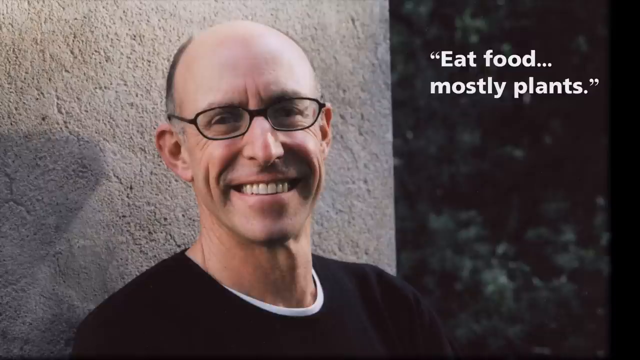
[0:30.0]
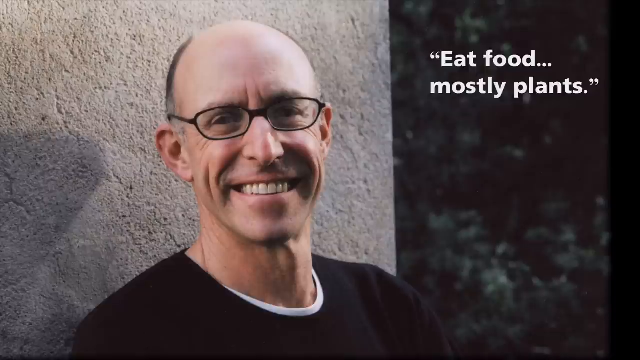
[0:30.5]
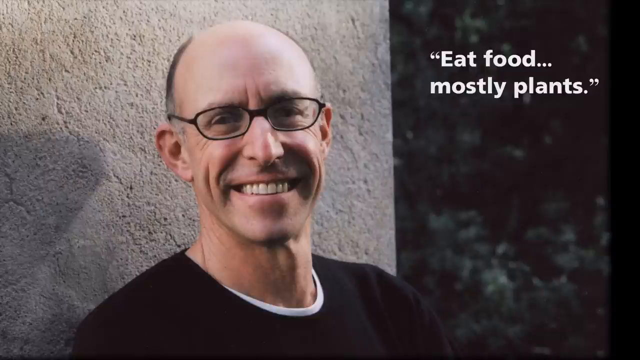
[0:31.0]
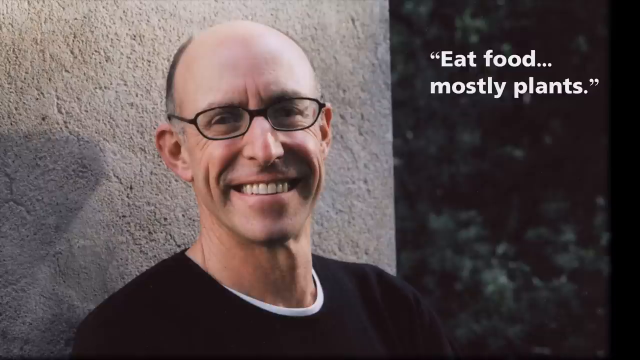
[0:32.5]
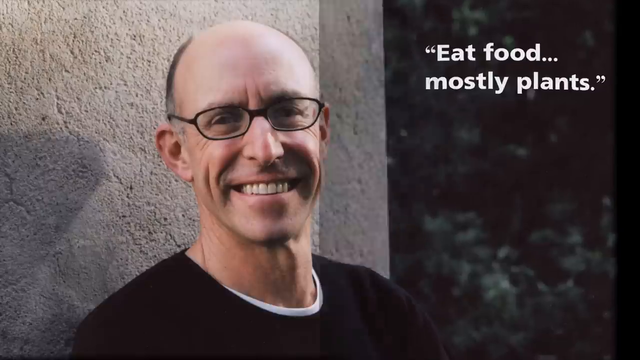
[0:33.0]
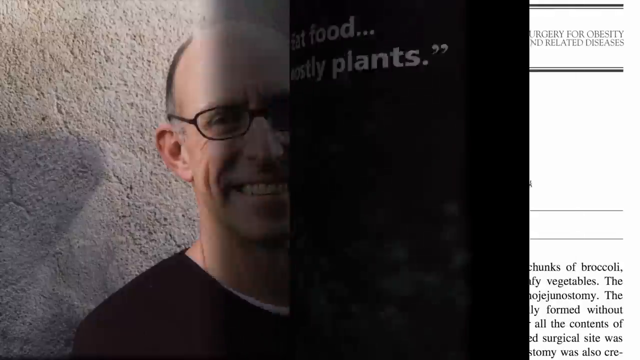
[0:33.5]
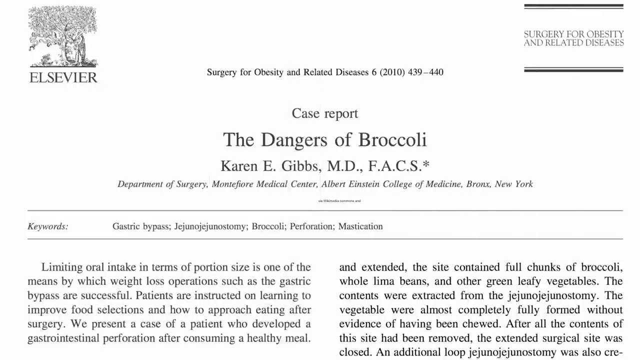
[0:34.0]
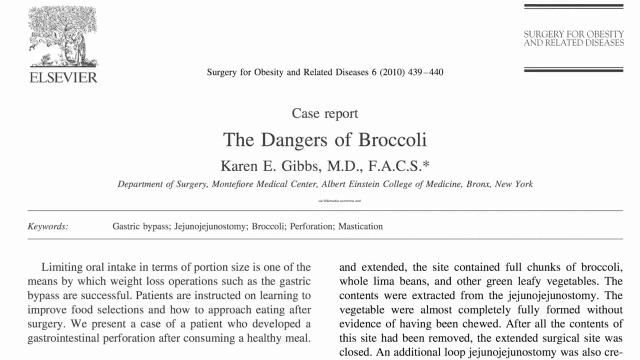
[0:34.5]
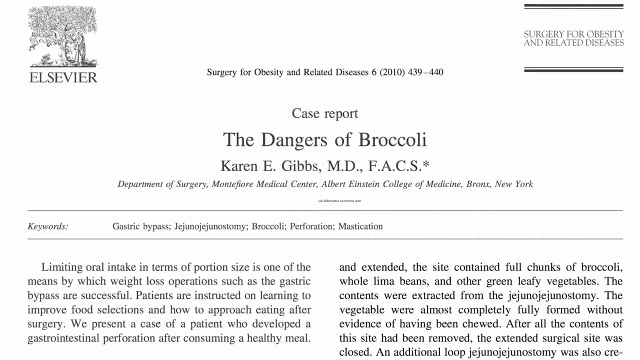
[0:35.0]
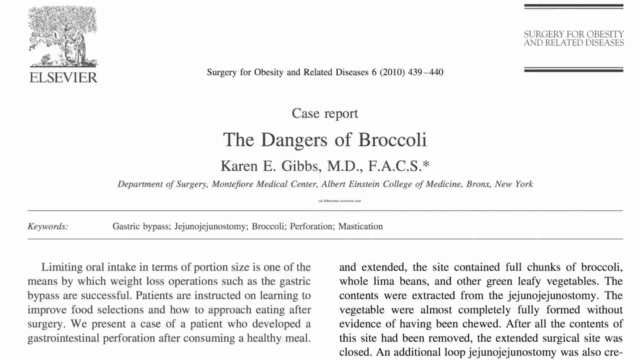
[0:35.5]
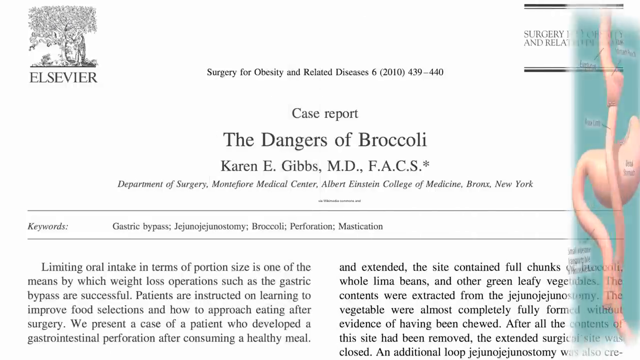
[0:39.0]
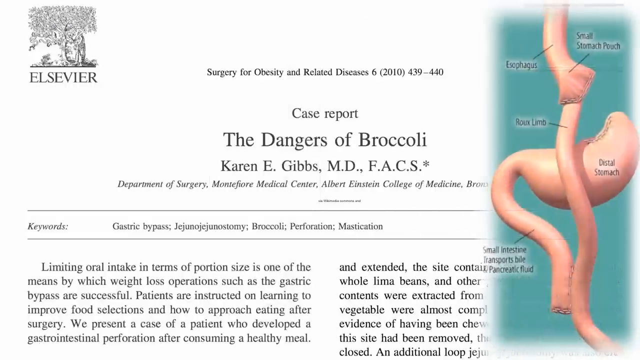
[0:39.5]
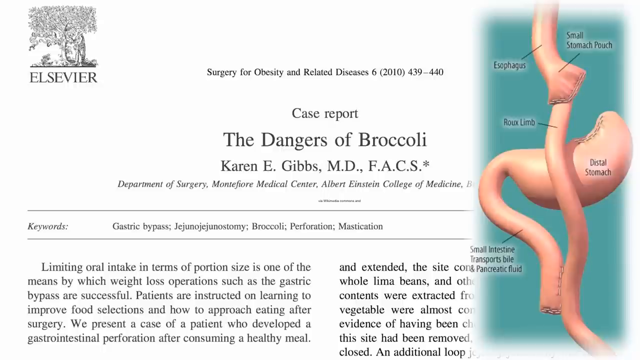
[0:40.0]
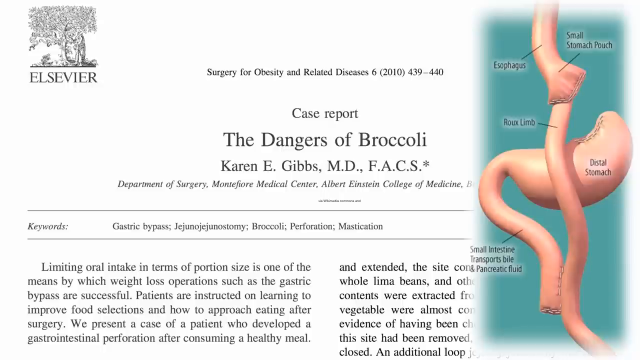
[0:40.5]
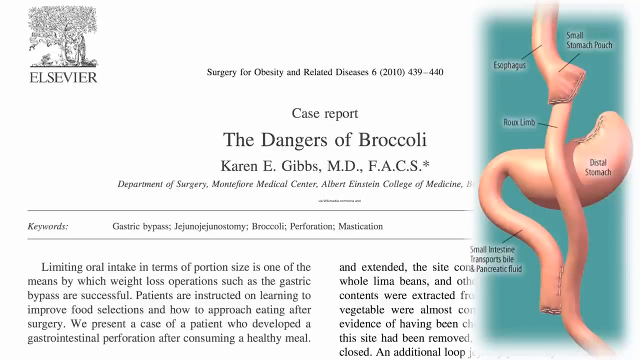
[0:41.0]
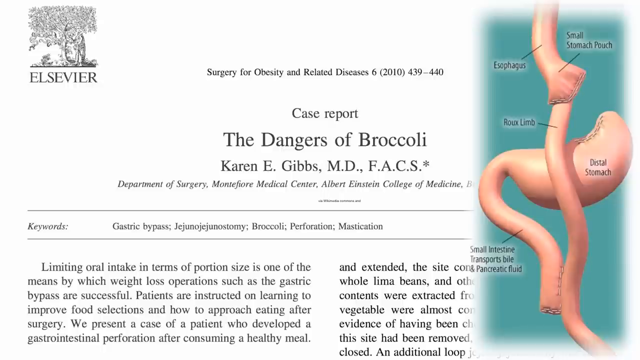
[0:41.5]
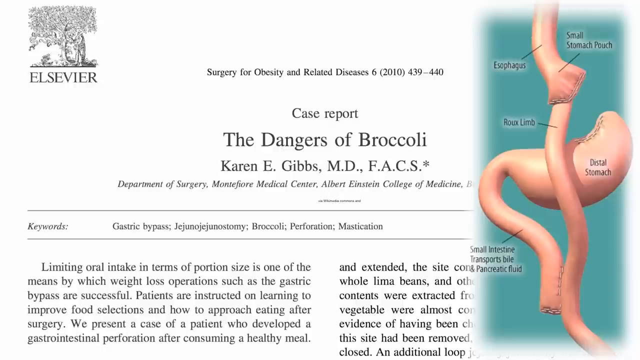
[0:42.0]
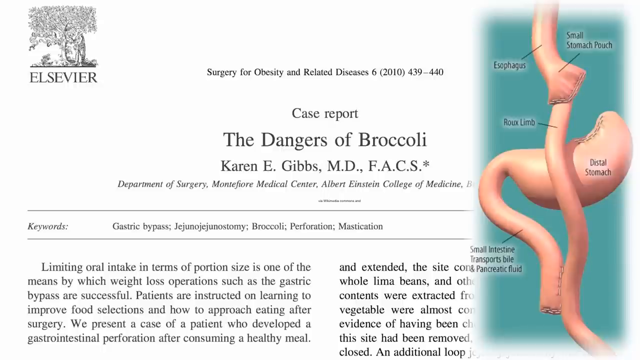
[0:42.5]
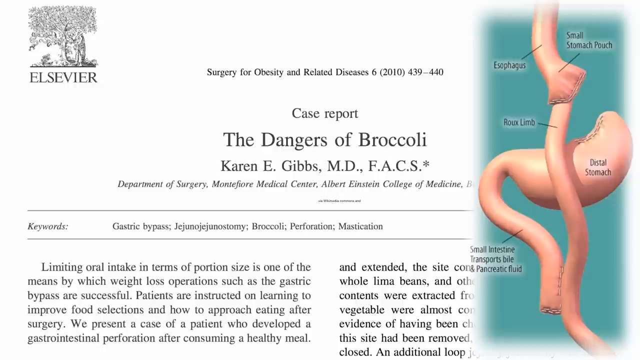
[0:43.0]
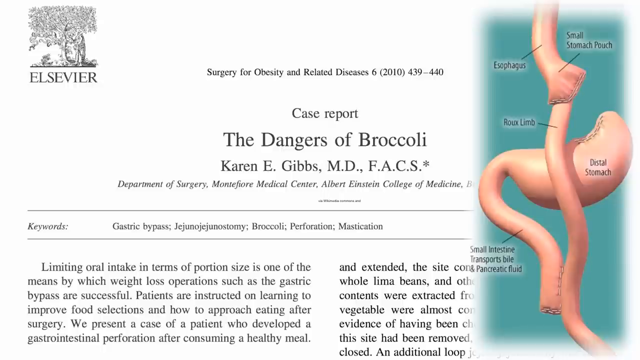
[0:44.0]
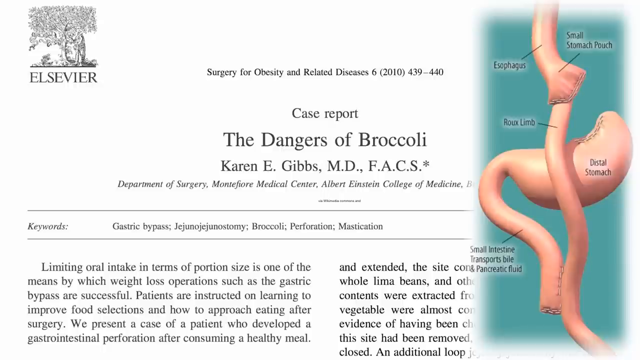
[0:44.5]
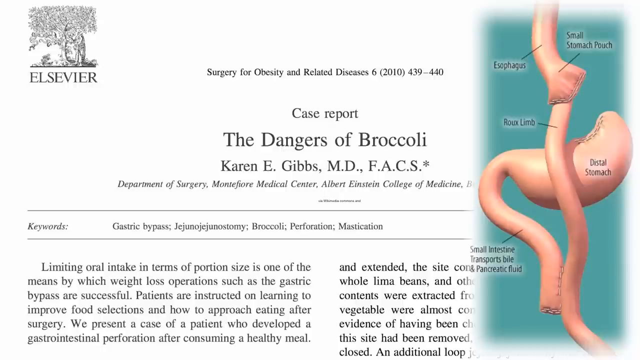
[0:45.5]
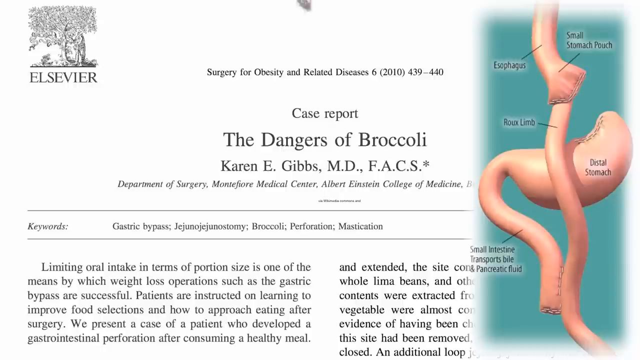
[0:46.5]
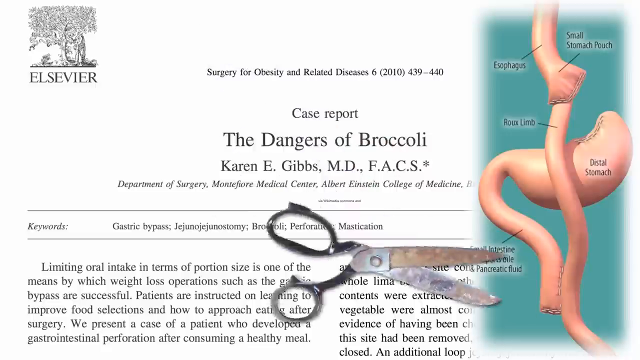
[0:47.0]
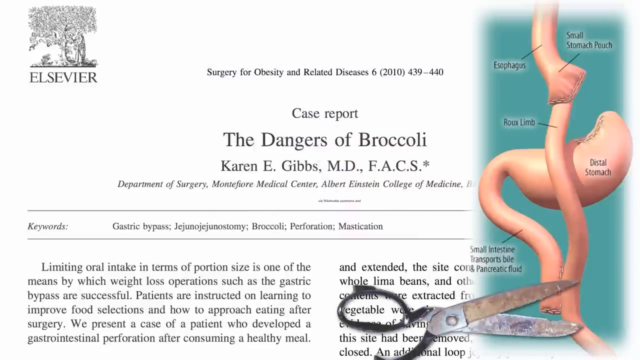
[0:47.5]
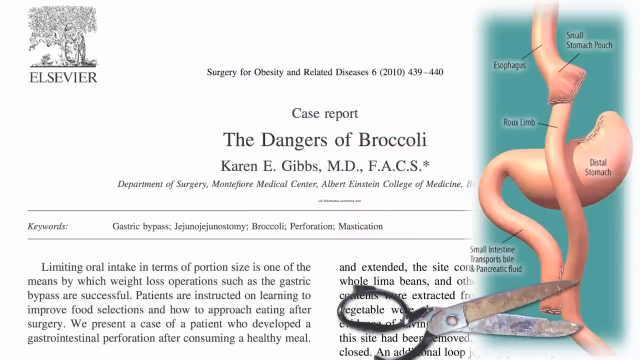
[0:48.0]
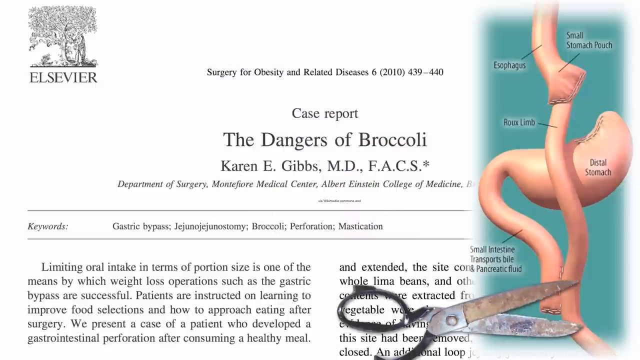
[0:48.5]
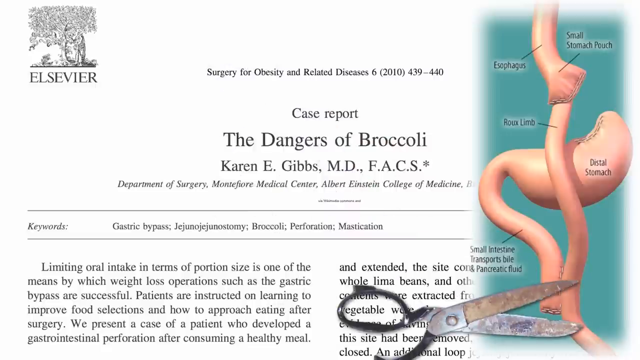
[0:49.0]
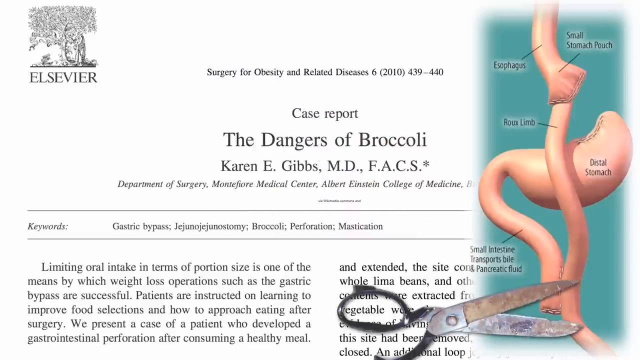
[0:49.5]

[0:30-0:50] The man is shown, then another page flip changes the slide to a picture of a research paper: a case report from the Elsevier journal Surgery for Obesity and Related Diseases. Its title is "The dangers of broccoli", by "Karen E. Gibbs, MD, FACS, Department of Surgery, Montefiore Medical Center, Albert Einstein College of Medicine, Bronx, New York". The first half of the paper is partly visible, reading "limiting oral intake in terms of portion size is one of the means by which weight loss operations, such as the gastric bypass, are successful." About five seconds later, a small image of what looks like the stomach and esophagus comes into view on the right side. It is a somewhat hyper-realistic diagram with labels such as "distal stomach", "esophagus" and "small stomach pouch", colored pink on a turquoise background.